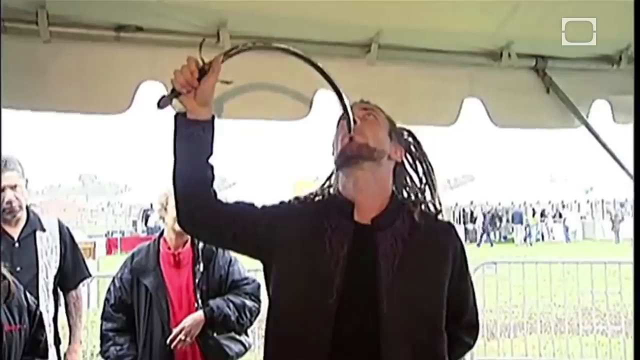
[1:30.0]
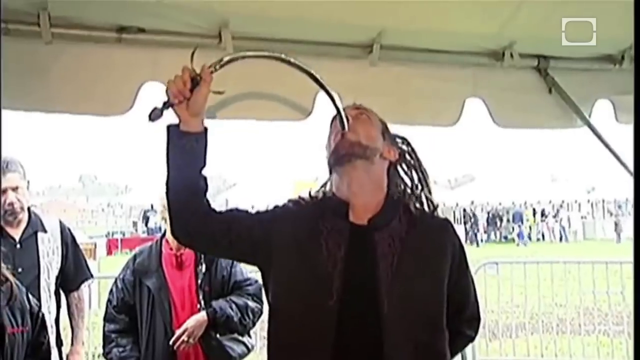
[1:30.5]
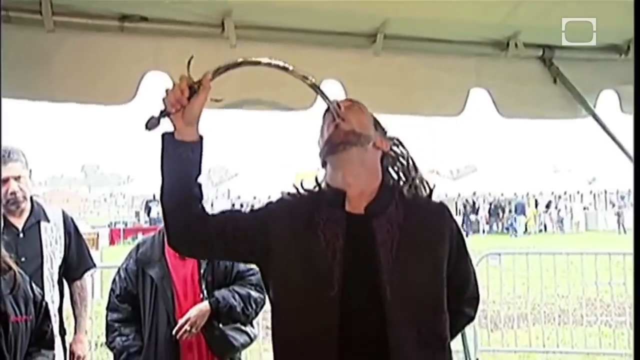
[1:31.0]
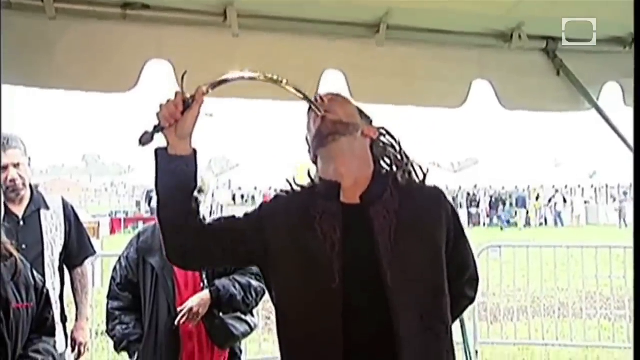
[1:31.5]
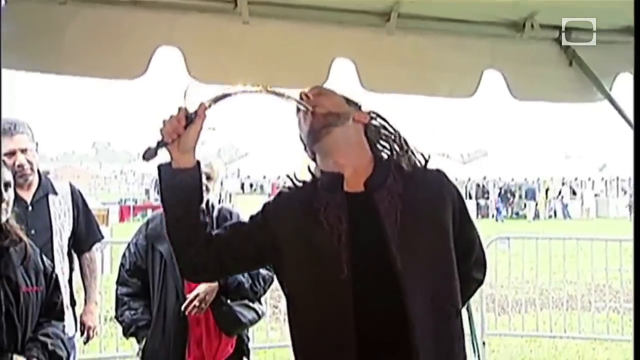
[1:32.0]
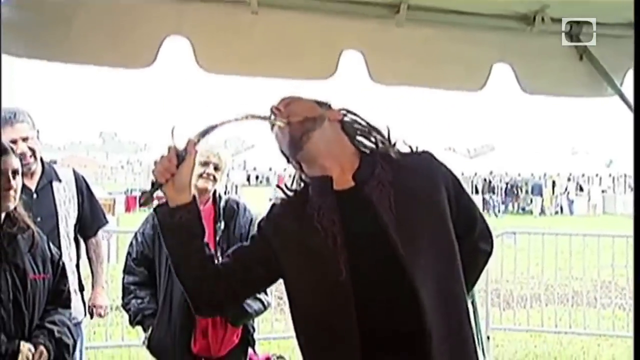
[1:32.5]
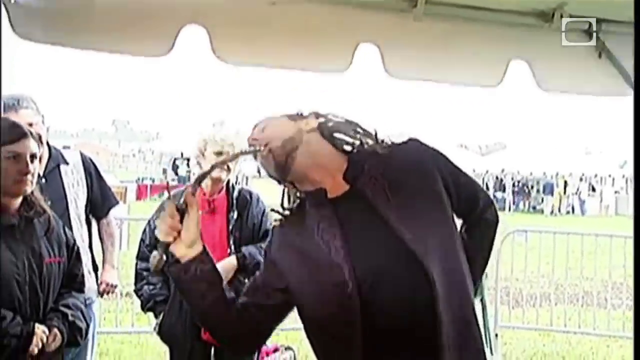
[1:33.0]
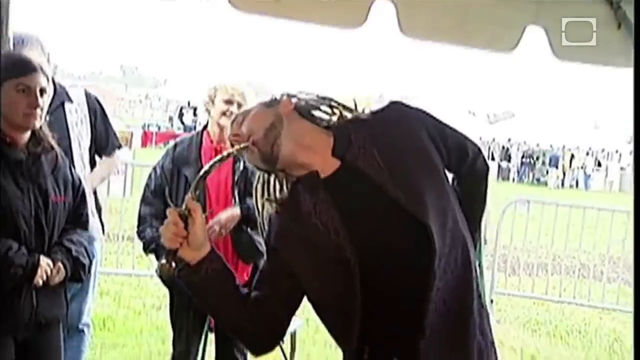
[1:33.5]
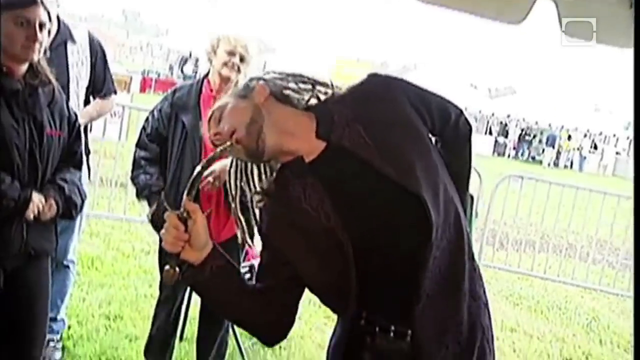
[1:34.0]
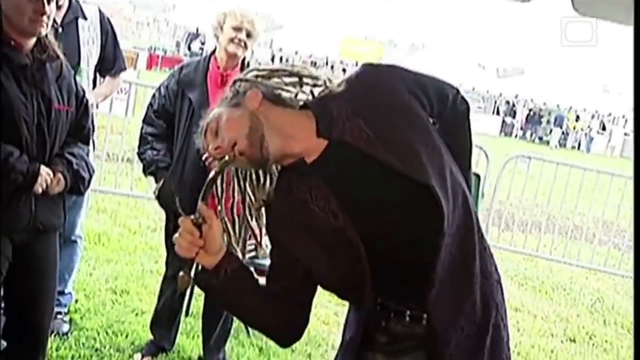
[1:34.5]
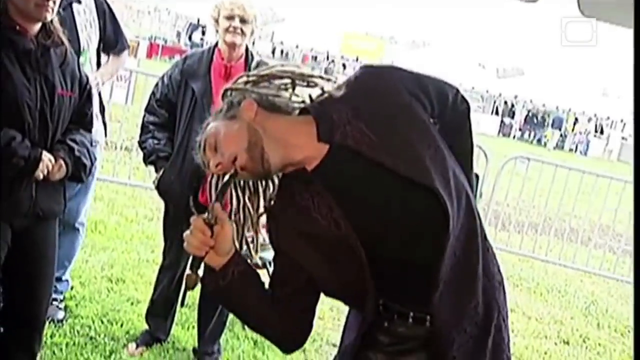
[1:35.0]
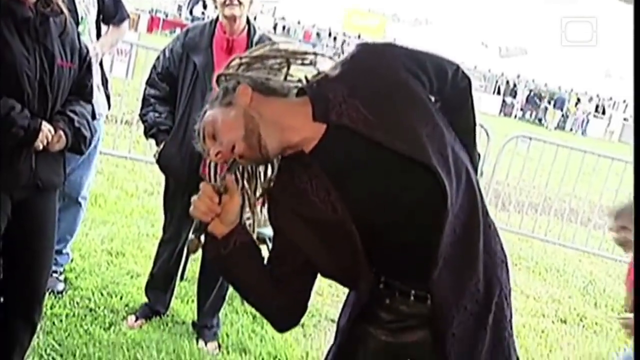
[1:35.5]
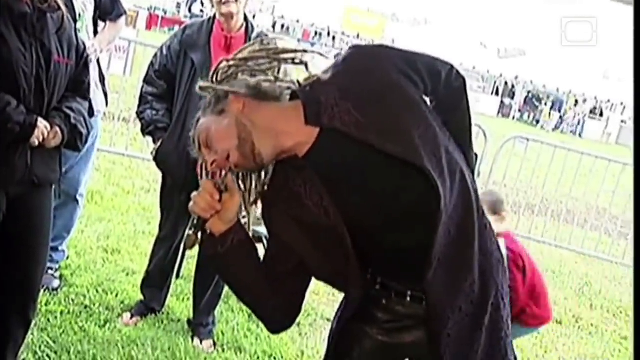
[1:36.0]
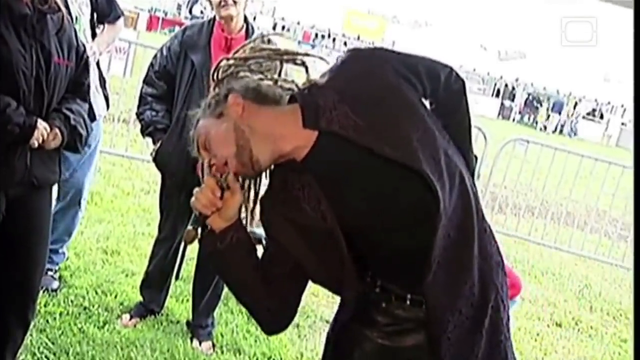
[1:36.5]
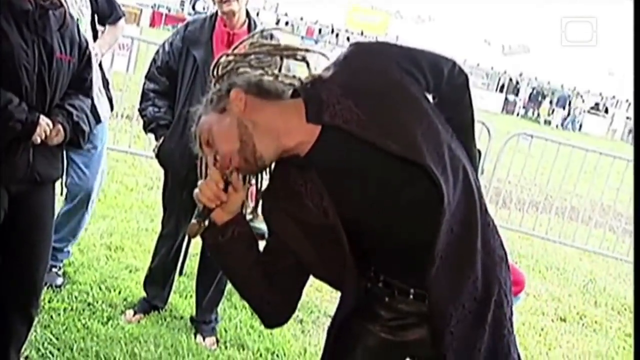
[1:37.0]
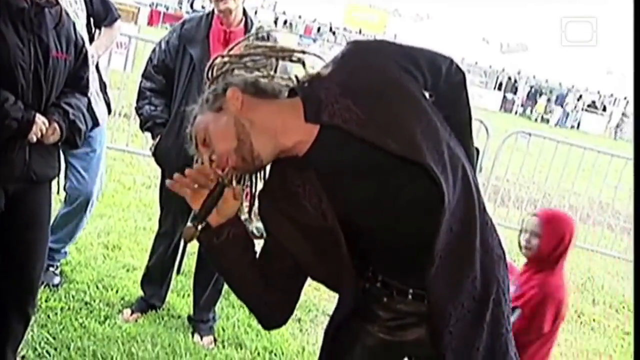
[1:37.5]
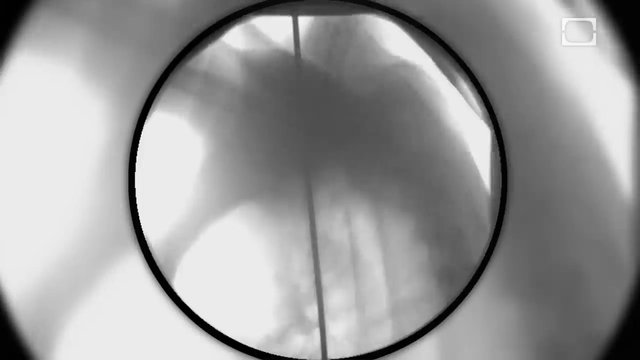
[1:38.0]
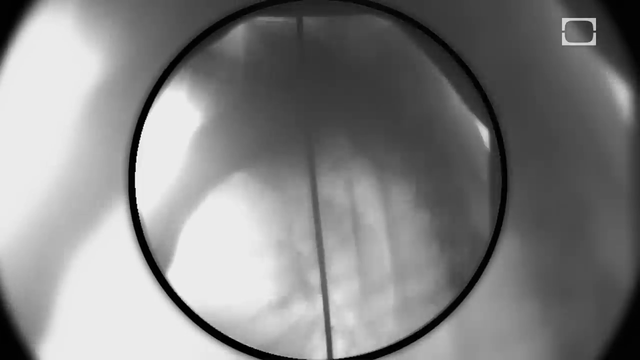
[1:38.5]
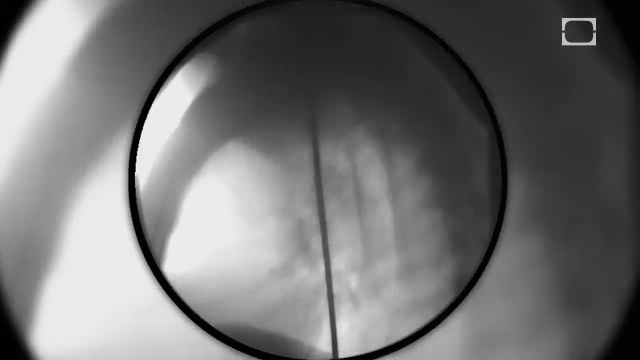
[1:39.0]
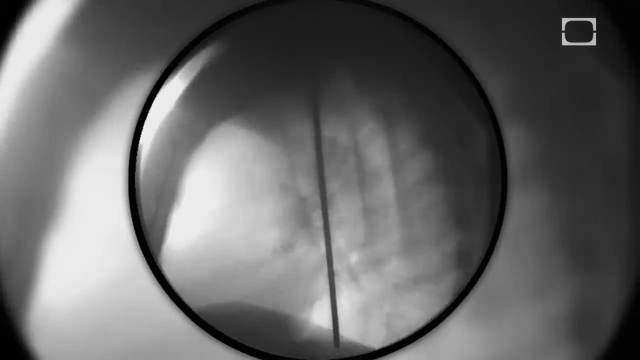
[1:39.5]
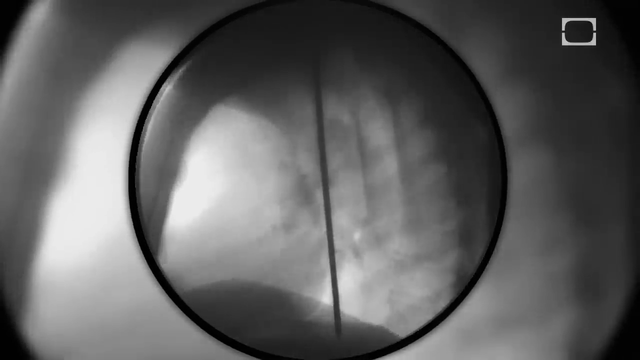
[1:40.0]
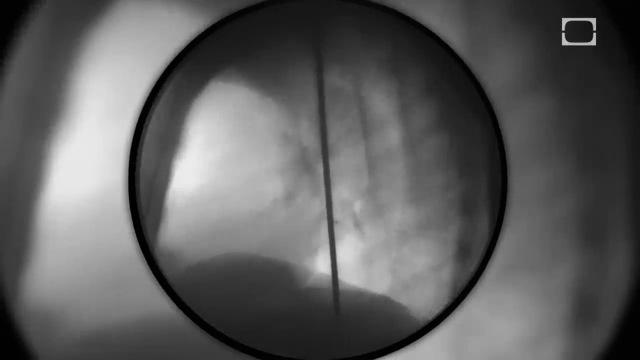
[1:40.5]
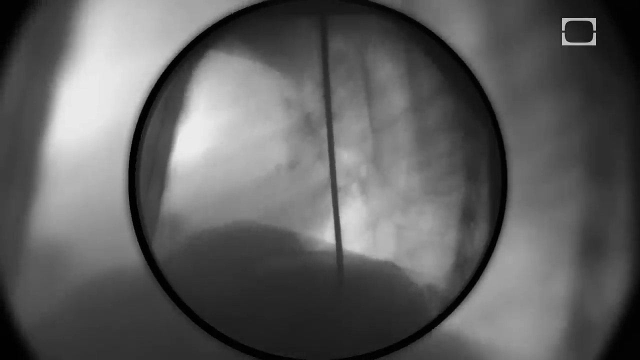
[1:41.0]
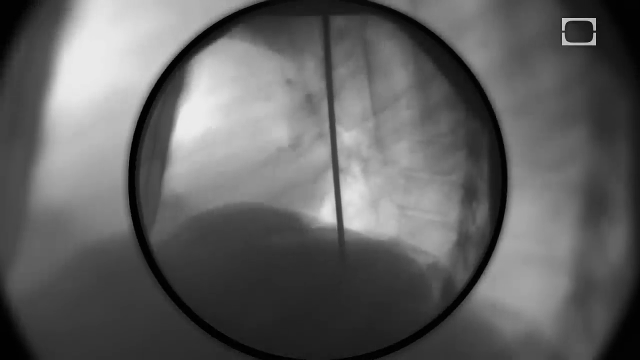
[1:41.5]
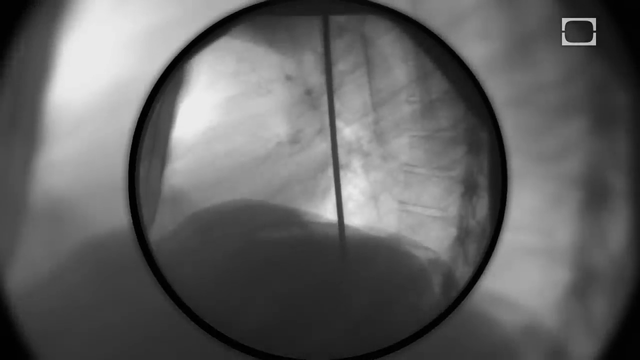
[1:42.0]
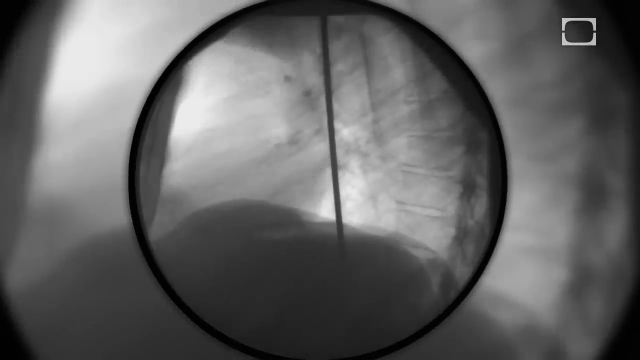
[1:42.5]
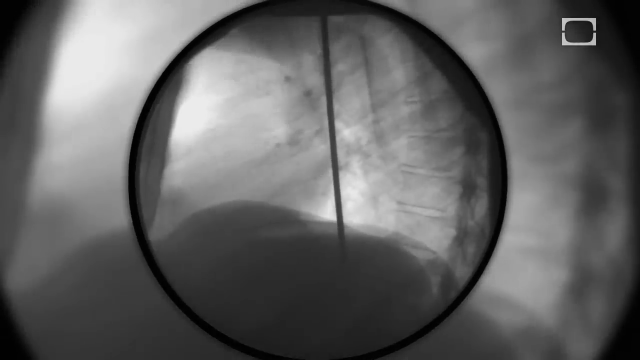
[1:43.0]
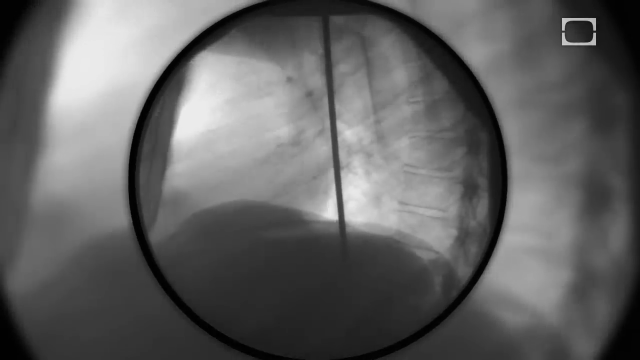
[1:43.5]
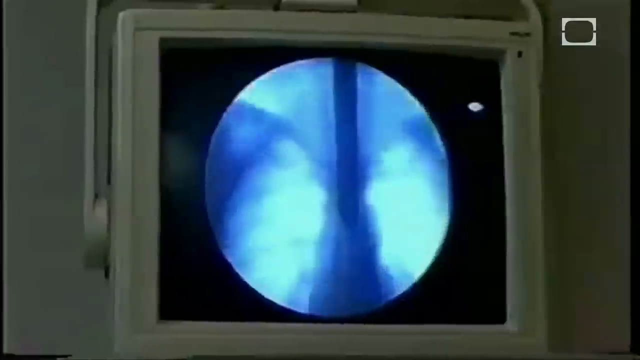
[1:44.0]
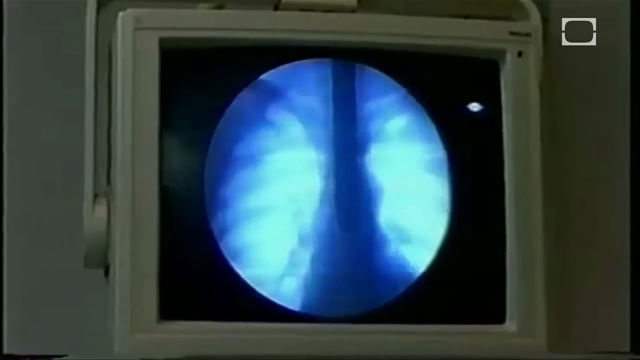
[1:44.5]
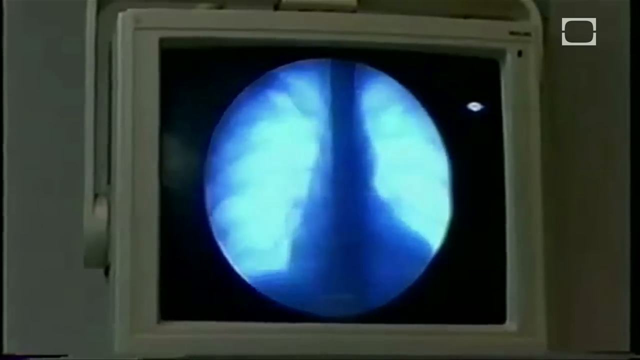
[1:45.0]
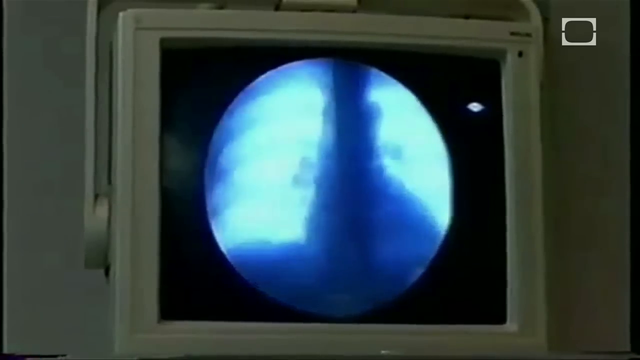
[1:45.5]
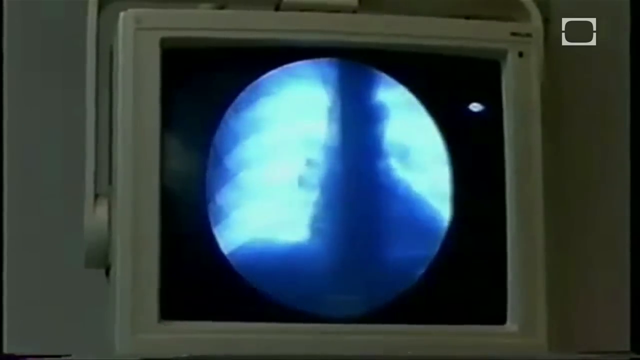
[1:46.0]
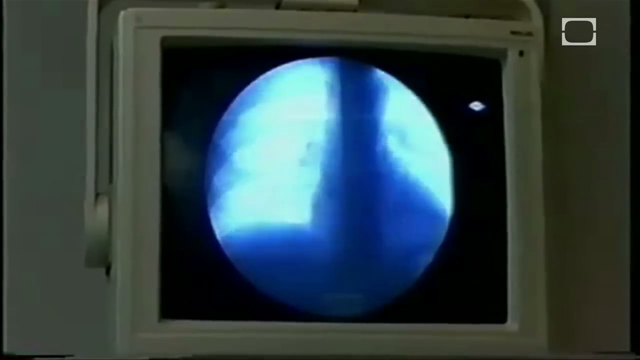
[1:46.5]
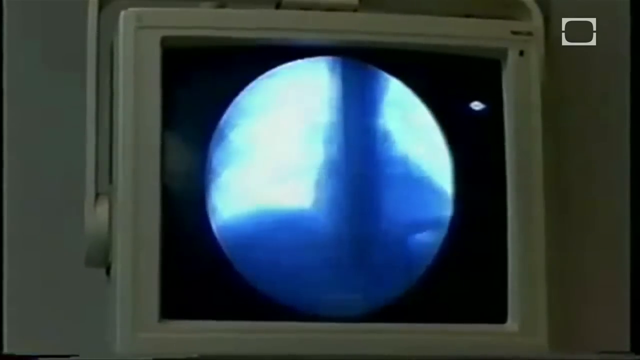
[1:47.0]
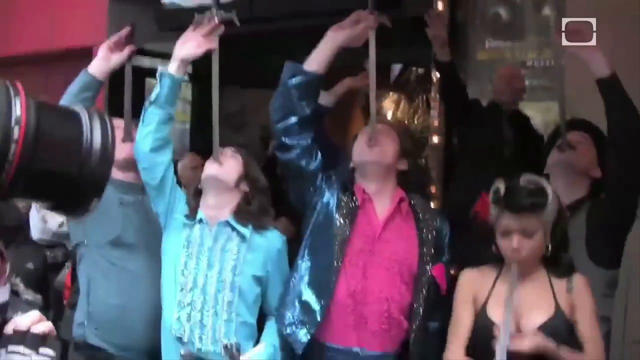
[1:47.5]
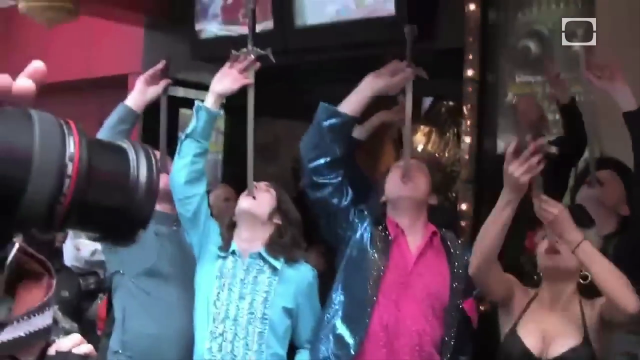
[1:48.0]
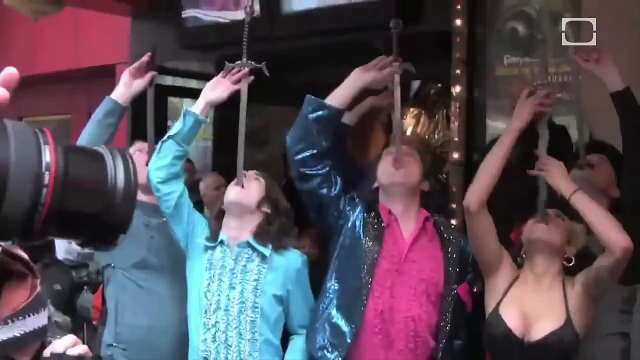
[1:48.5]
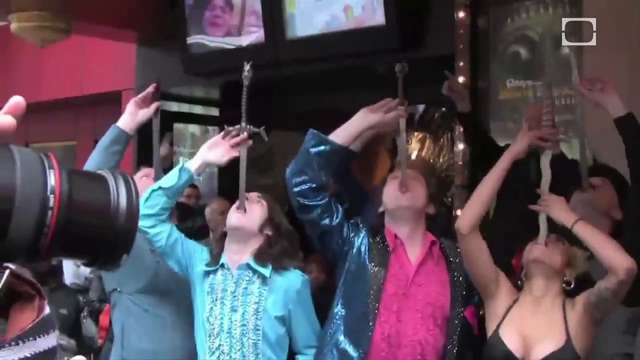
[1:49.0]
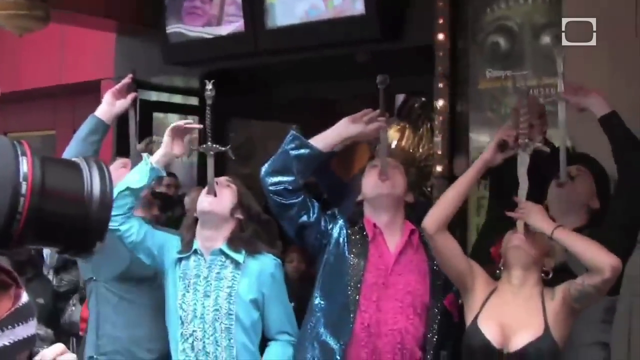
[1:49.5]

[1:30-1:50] Another man, a man of color with dreads, does some sort of exhibition outside, a local show where people watch him put a curved sword into his mouth. A magnified black-and-white X-ray follows, then an X-ray screen showing the sword inside the chest while it is swallowed. Another show or exhibition features several people swallowing swords: about five people, apparently four men and one woman on the right-hand side, all with their heads turned up, swallowing swords at the same time.